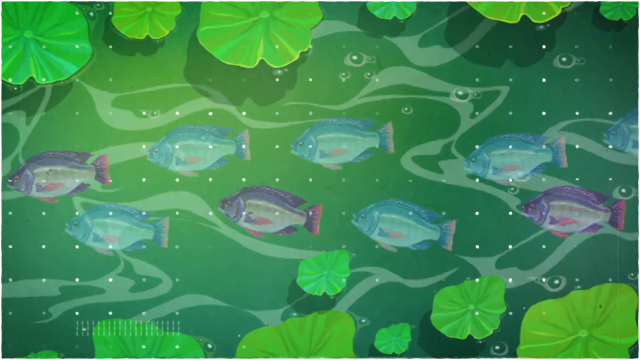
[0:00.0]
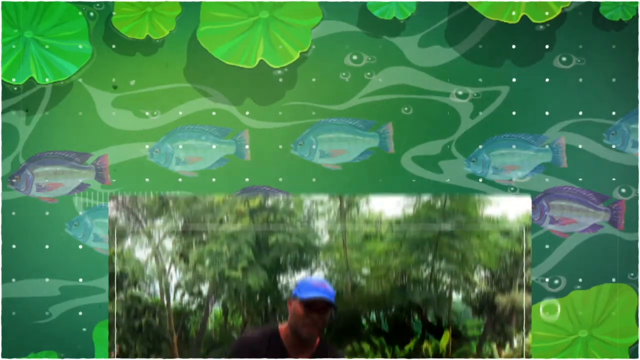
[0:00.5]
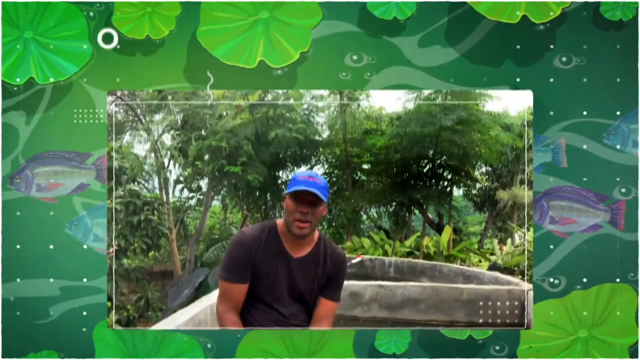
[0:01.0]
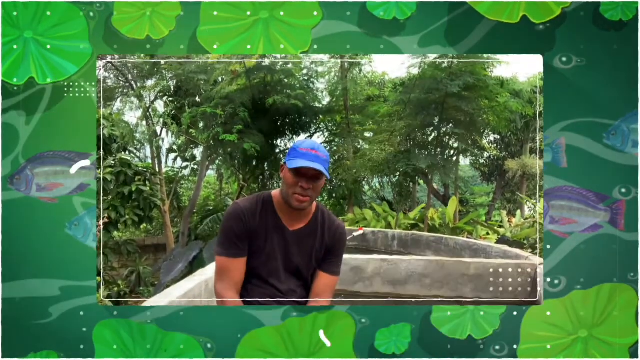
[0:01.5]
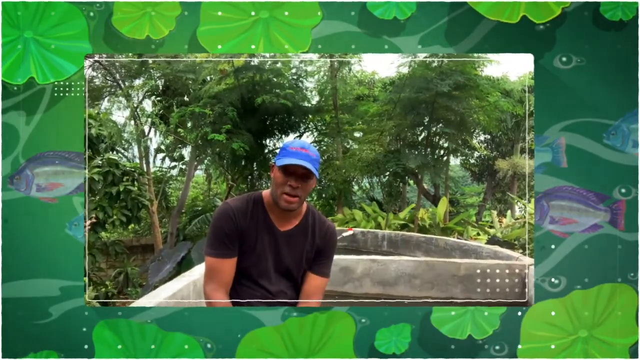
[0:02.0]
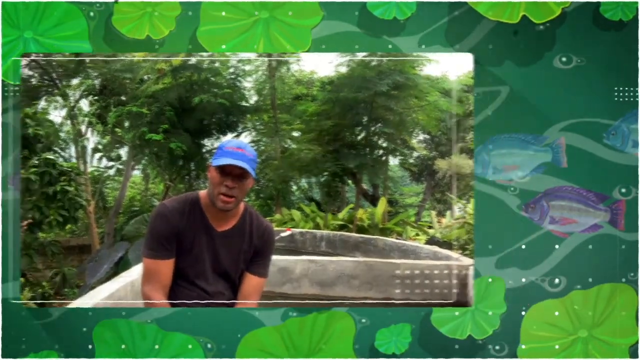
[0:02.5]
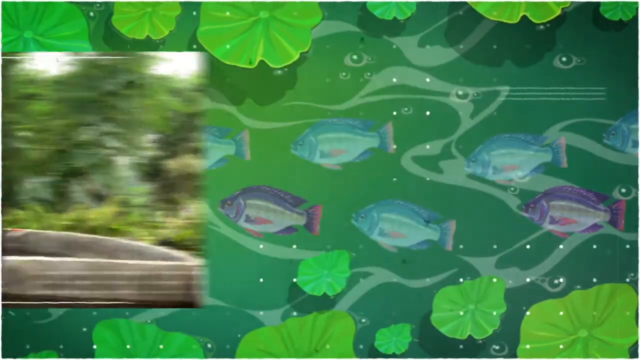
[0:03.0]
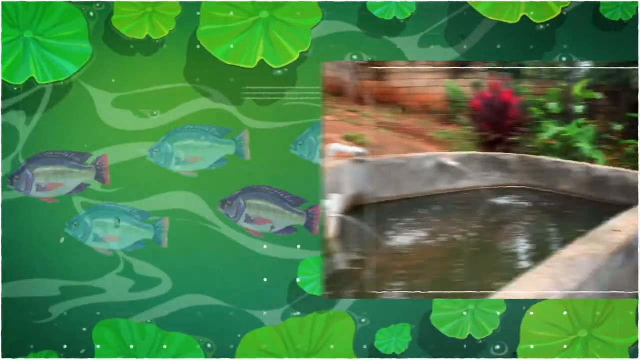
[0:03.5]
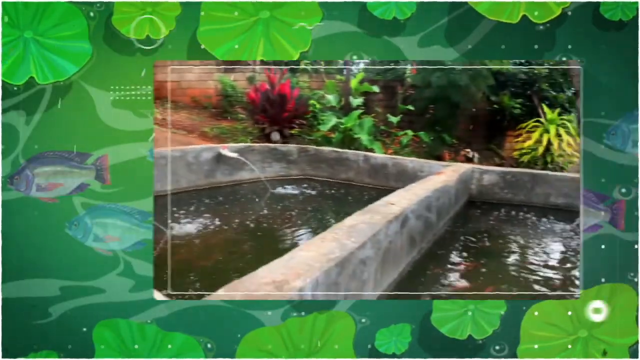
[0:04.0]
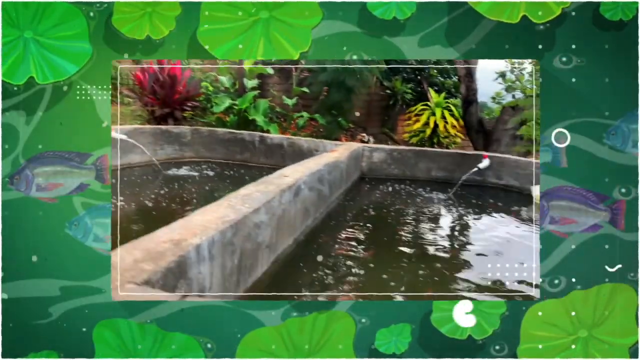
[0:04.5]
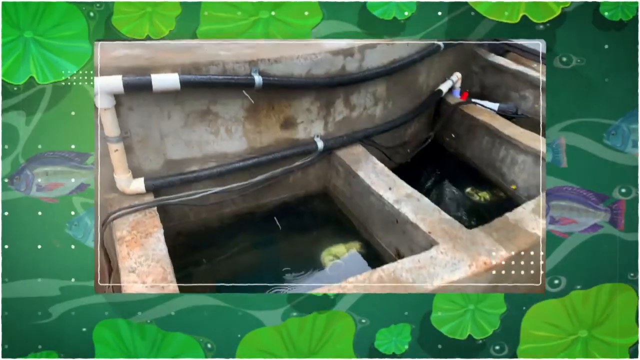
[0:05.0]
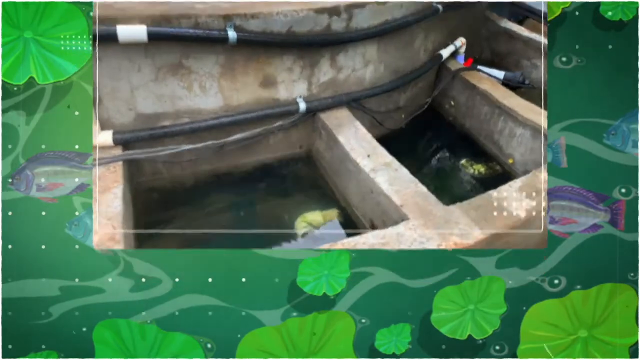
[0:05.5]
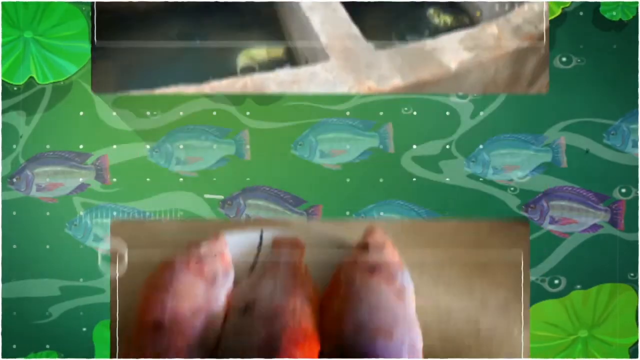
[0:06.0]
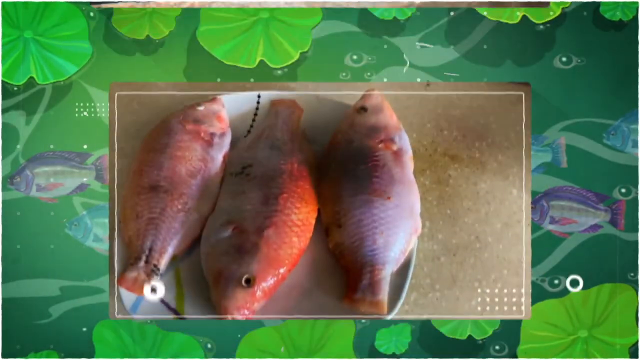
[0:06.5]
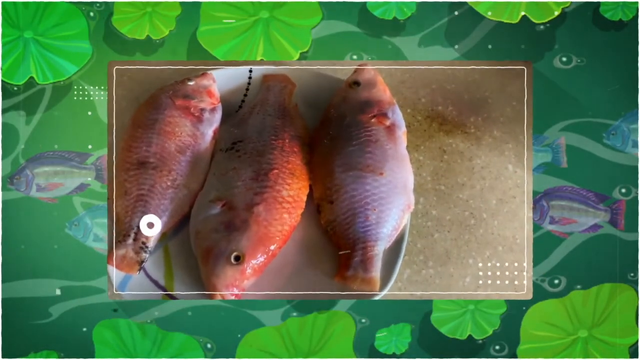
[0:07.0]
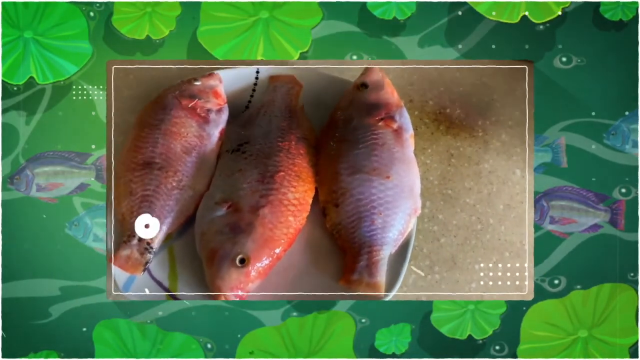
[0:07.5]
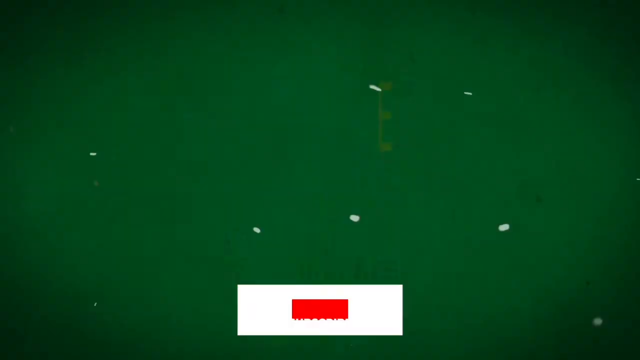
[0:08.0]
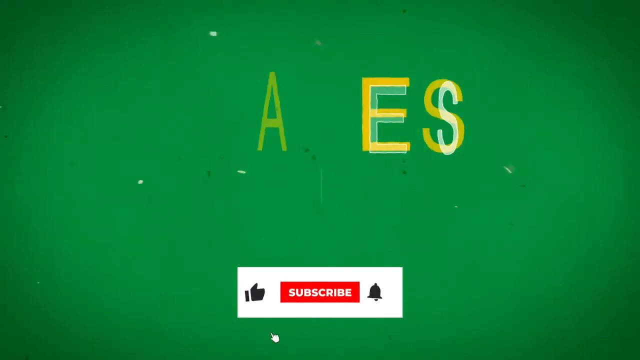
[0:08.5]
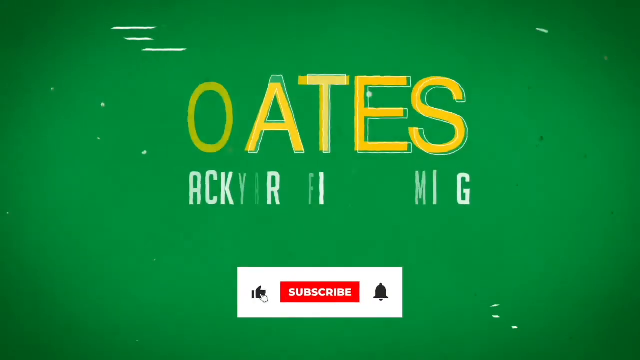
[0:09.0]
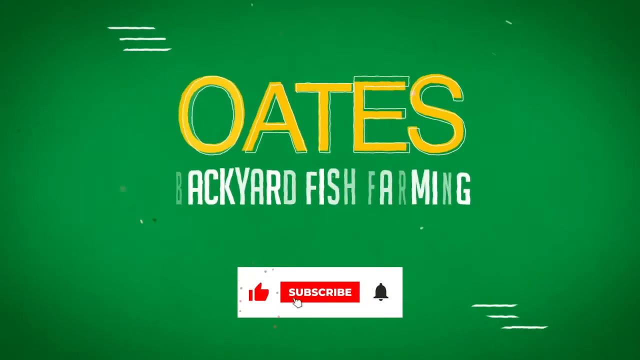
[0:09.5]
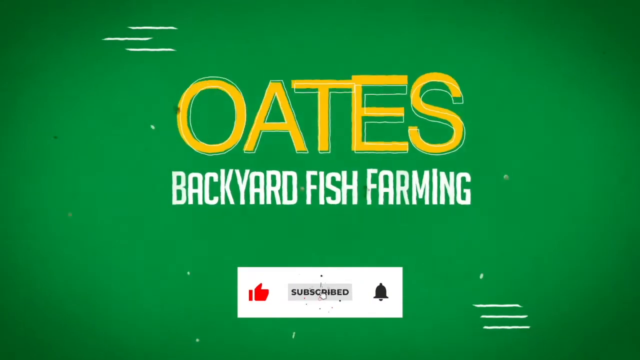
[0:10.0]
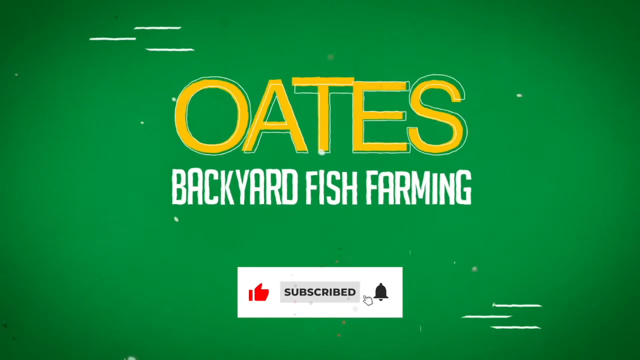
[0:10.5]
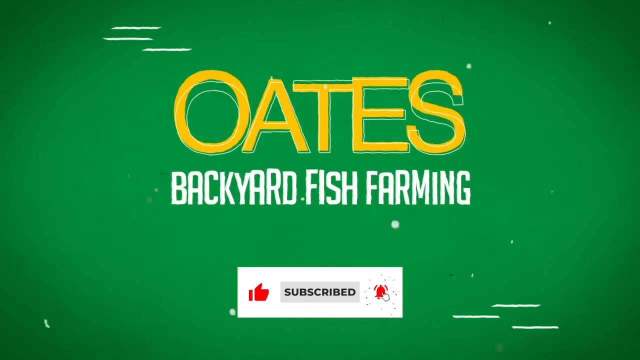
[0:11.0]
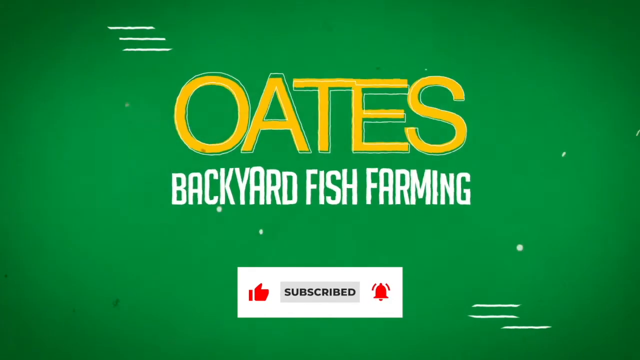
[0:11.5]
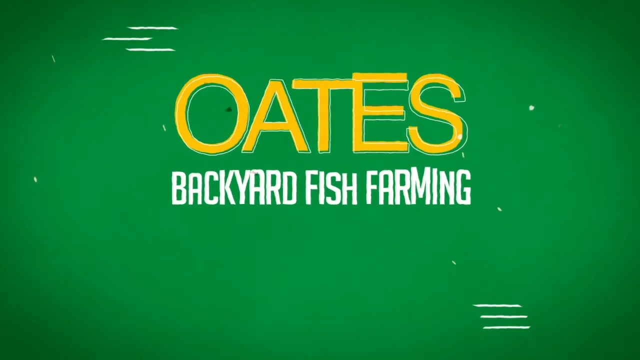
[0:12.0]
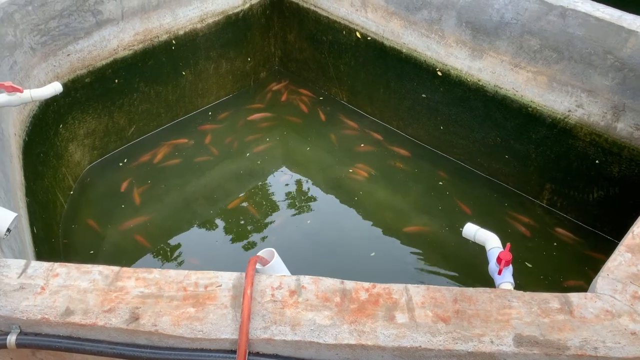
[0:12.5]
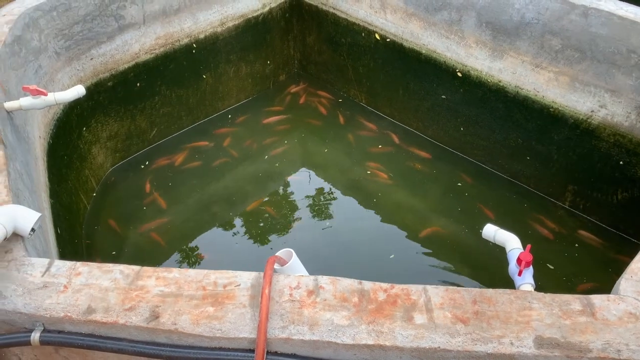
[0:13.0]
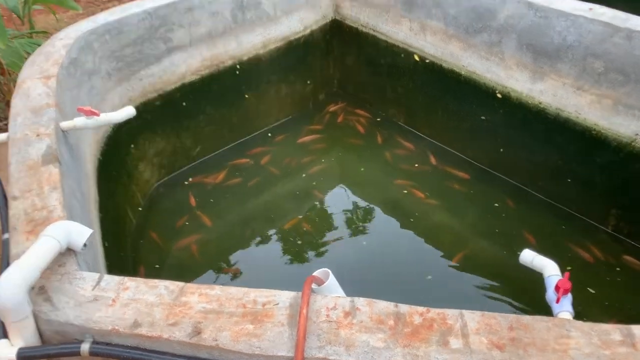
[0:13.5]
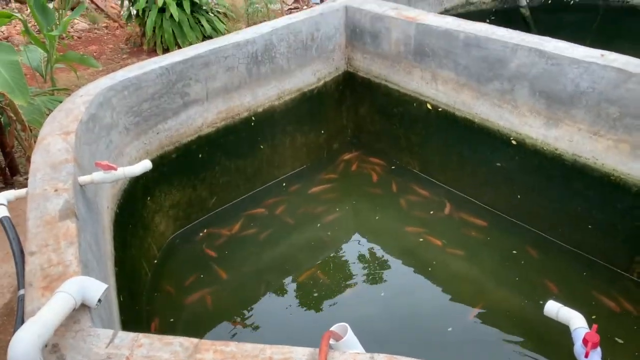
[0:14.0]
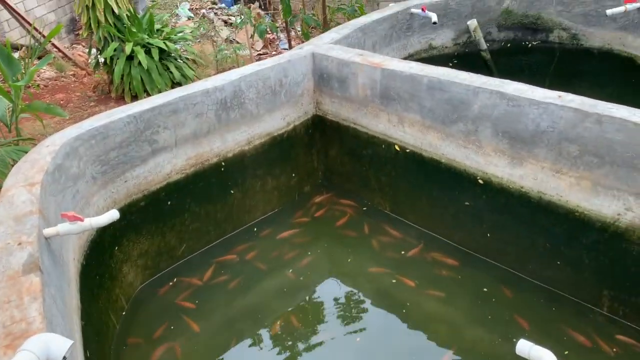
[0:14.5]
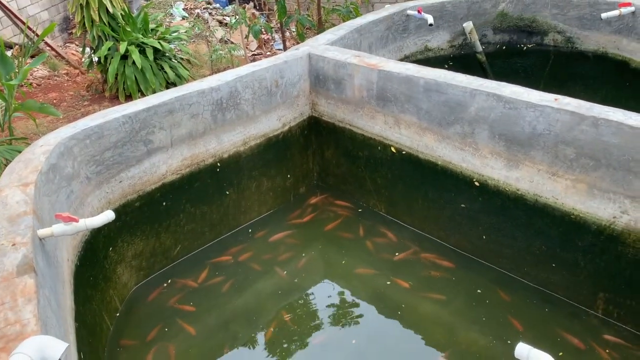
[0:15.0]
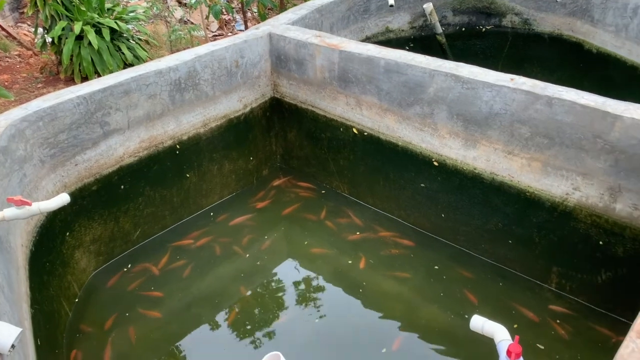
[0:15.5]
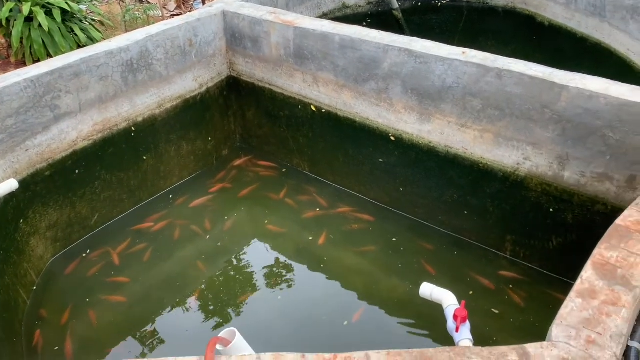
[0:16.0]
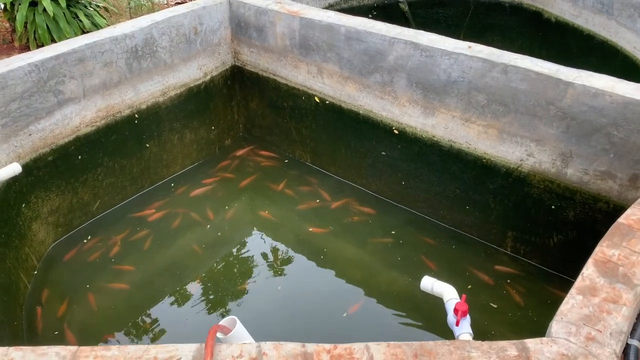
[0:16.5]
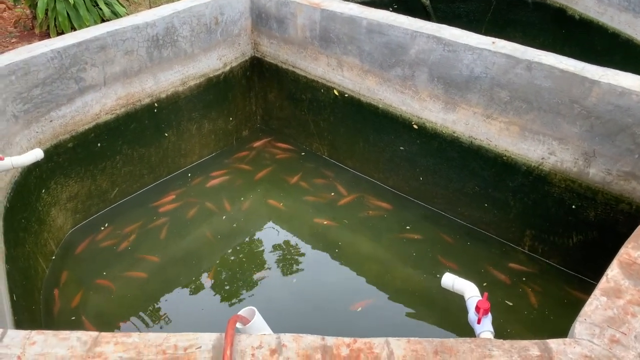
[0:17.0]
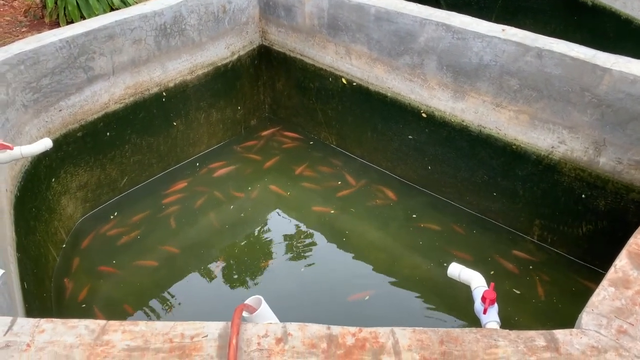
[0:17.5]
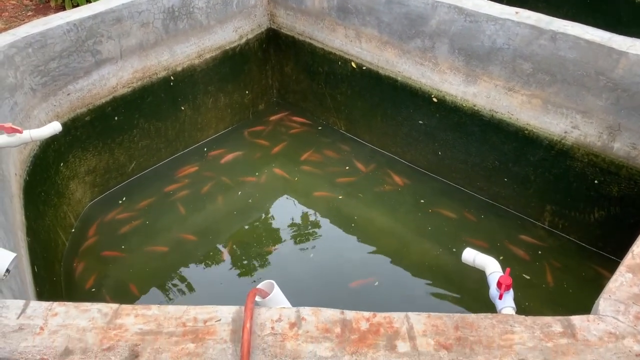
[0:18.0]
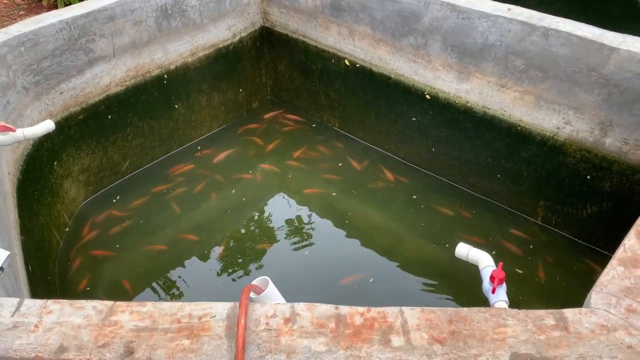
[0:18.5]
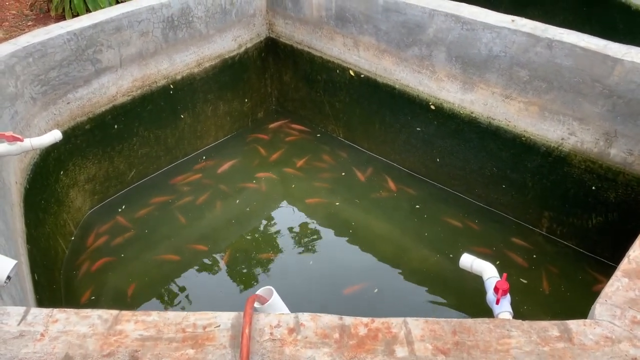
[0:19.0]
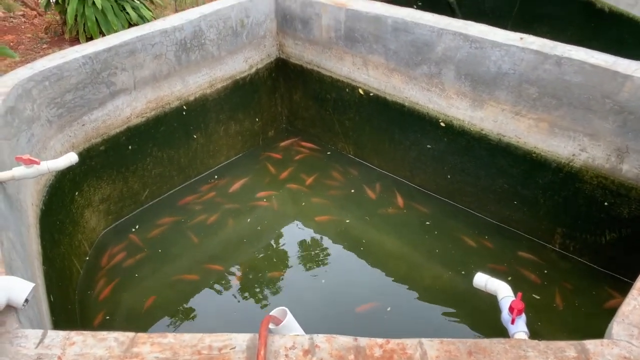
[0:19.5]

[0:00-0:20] Against a green background, green leaves float on top of the water, and gray and purple fish, about five up top and another five below, are visible, with little white streams going across. A young black man wearing a black t-shirt and a blue cap talks to the camera. Behind him is a cement-gray framed area, and behind that are white clouds, green trees and green vegetation. A pool is shown with a white pipe hanging off the side; it is separated by a cement block, and a little vegetation is visible inside. About three purple and orange fish are on a white plate. On a green screen, yellow lettering at the top reads "oats", and below it white lettering reads "backyard fish farming". In the box below there is a red thumbs-up hand on the left side, a red box in the center with white "subscribe" text, apparently a small white hand clicking on it, and a black bell on the right side.